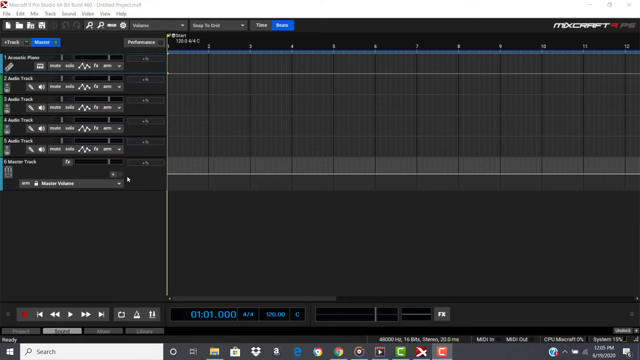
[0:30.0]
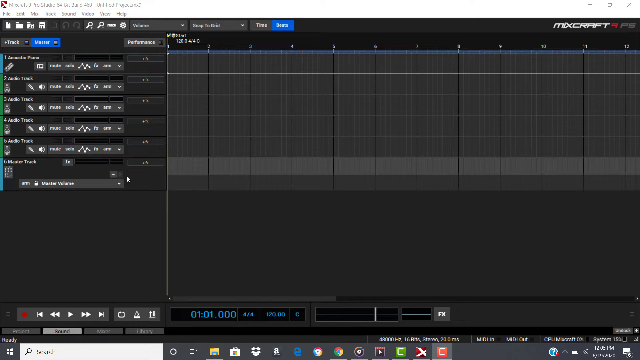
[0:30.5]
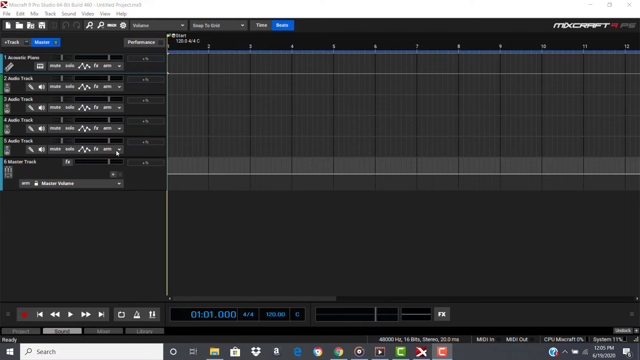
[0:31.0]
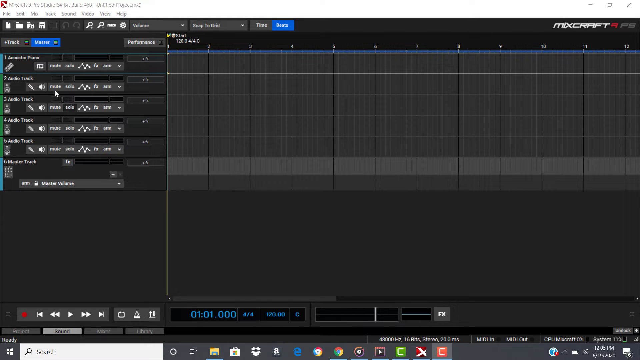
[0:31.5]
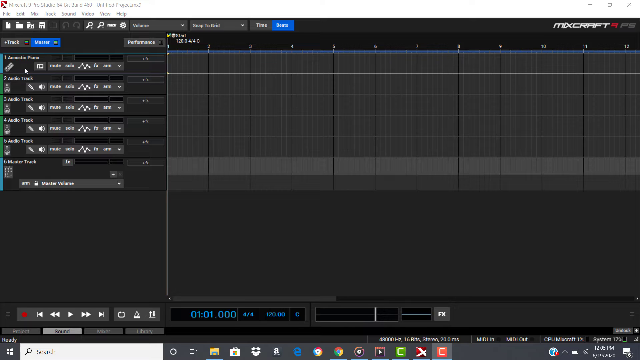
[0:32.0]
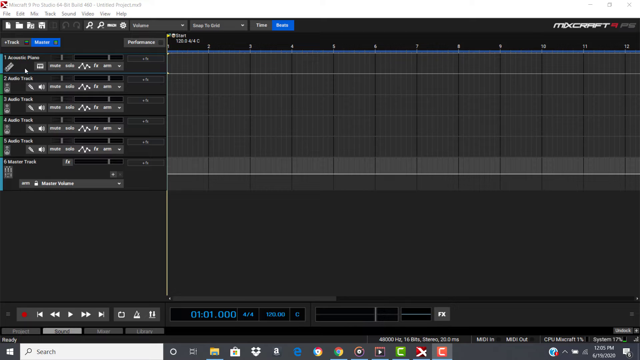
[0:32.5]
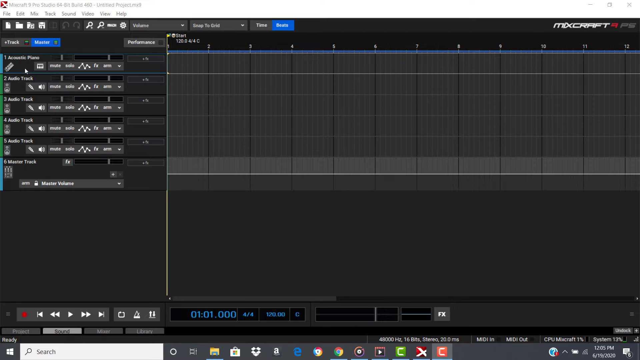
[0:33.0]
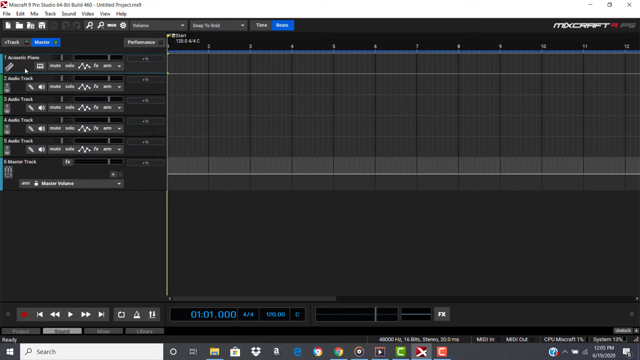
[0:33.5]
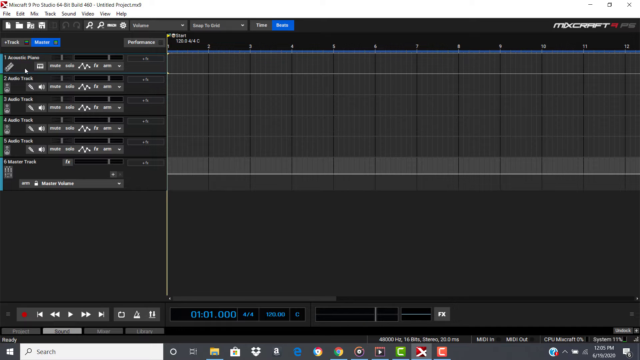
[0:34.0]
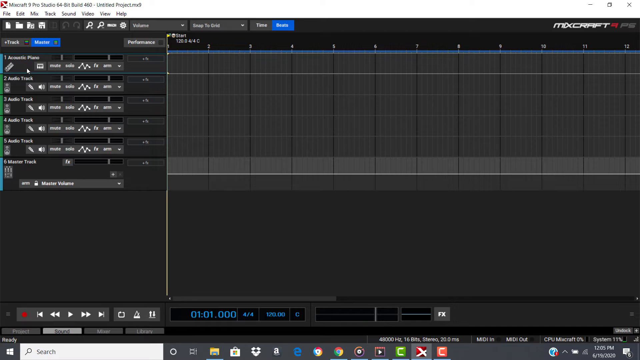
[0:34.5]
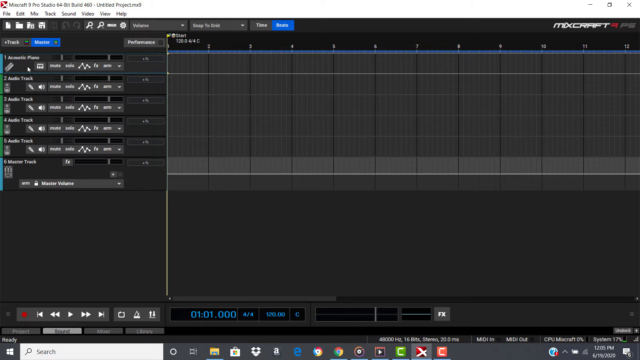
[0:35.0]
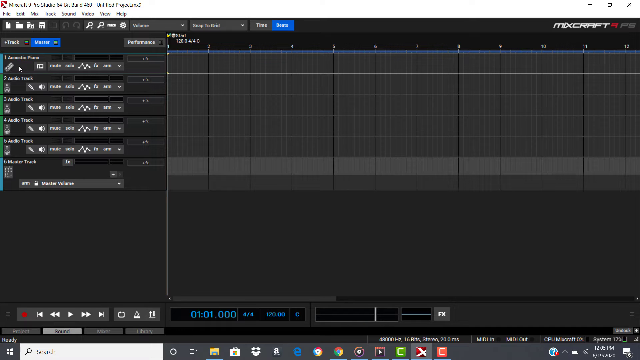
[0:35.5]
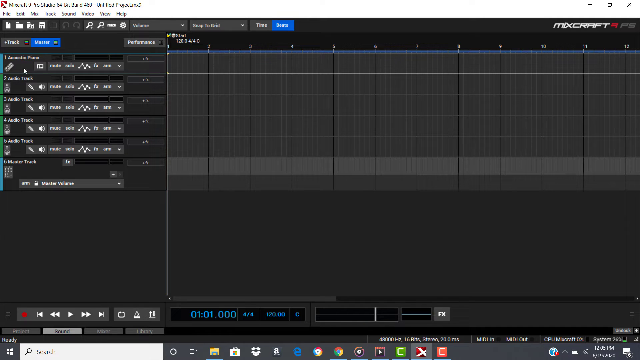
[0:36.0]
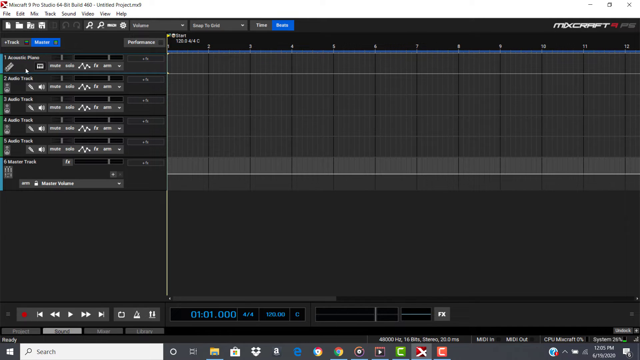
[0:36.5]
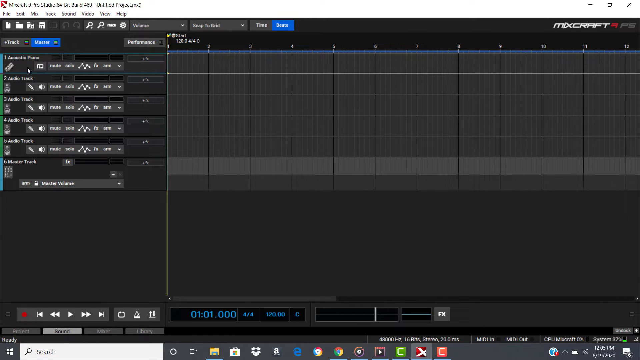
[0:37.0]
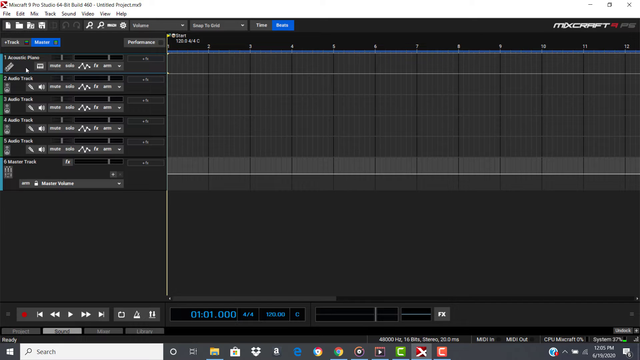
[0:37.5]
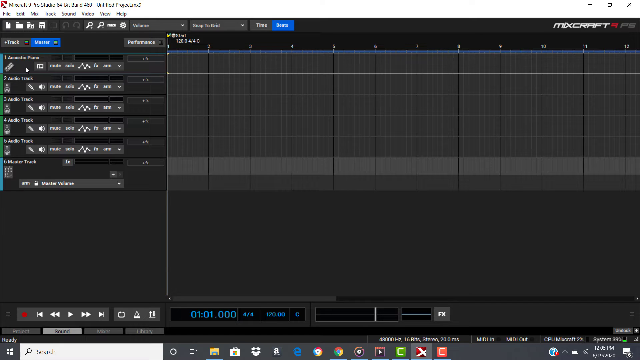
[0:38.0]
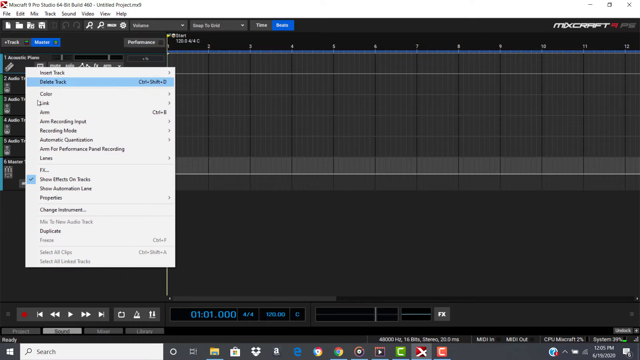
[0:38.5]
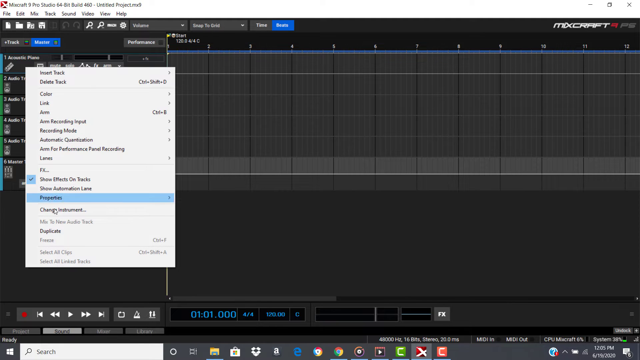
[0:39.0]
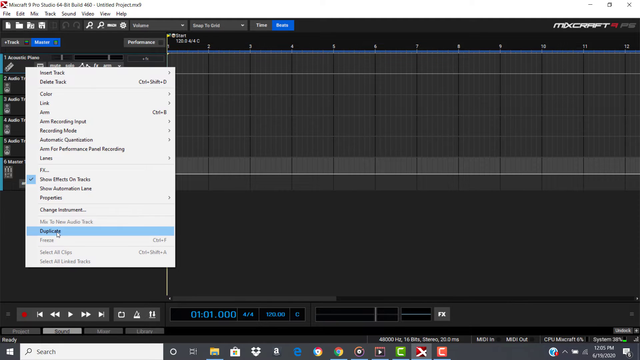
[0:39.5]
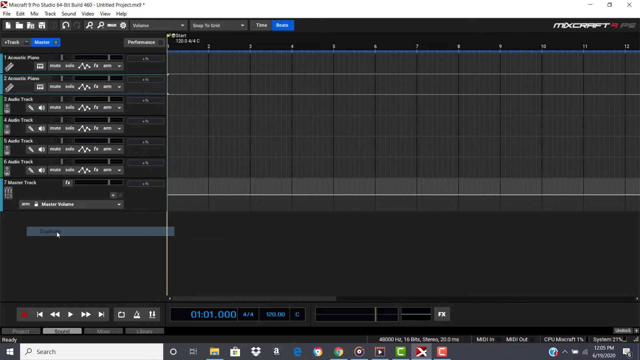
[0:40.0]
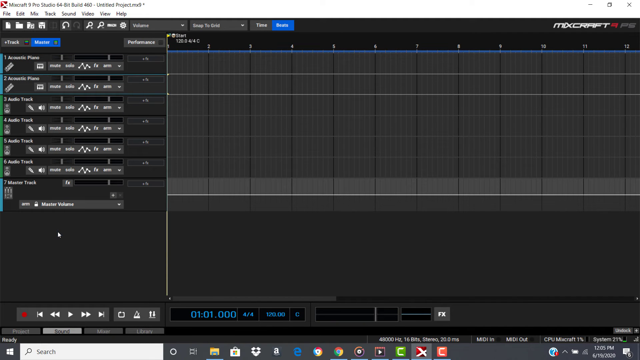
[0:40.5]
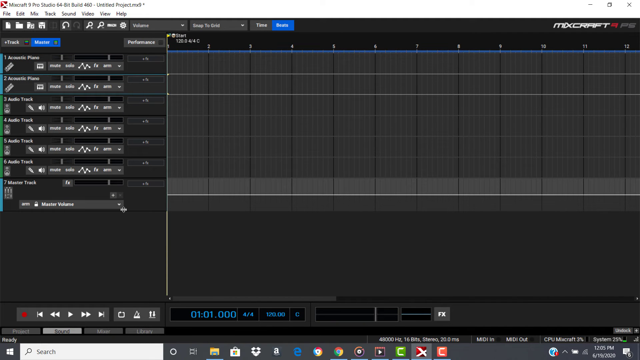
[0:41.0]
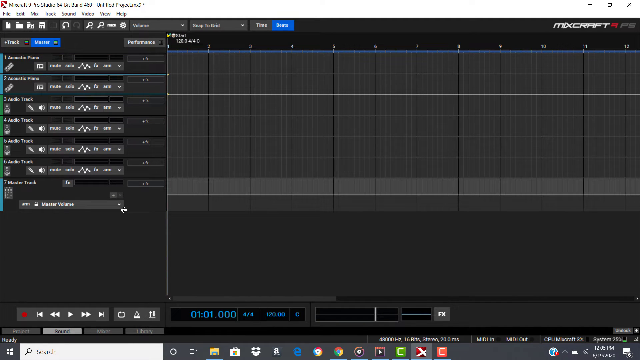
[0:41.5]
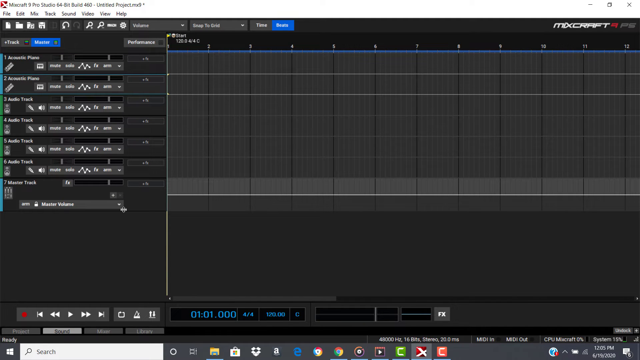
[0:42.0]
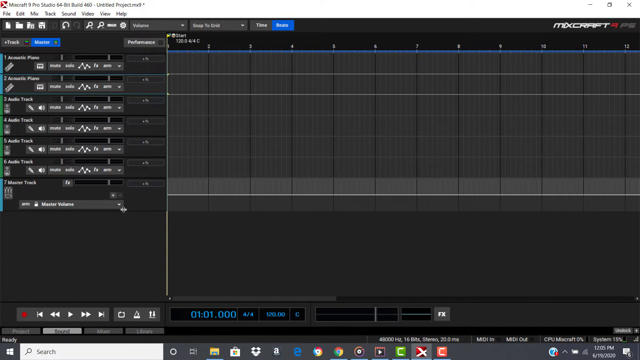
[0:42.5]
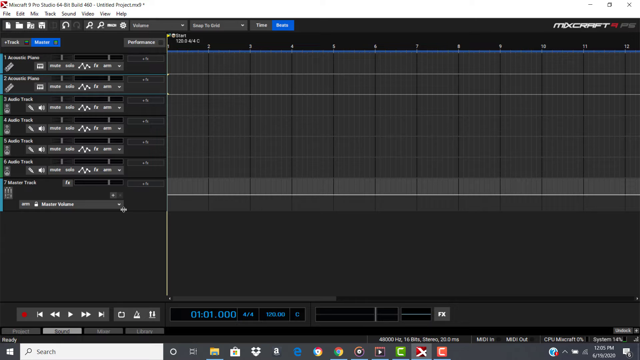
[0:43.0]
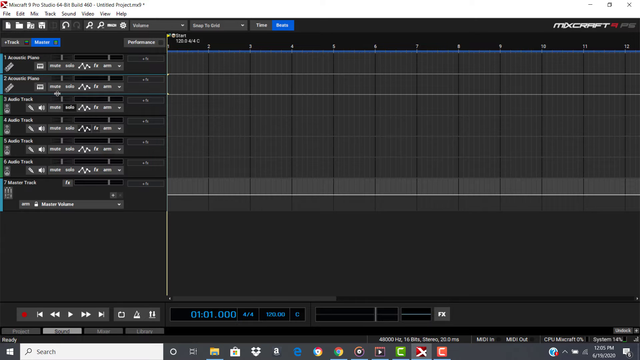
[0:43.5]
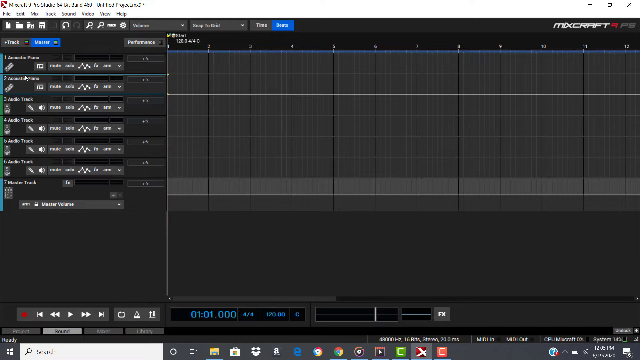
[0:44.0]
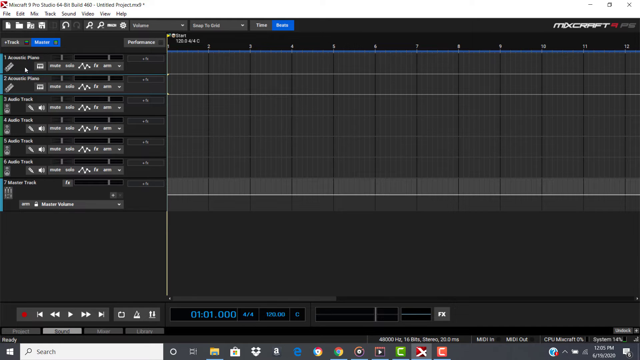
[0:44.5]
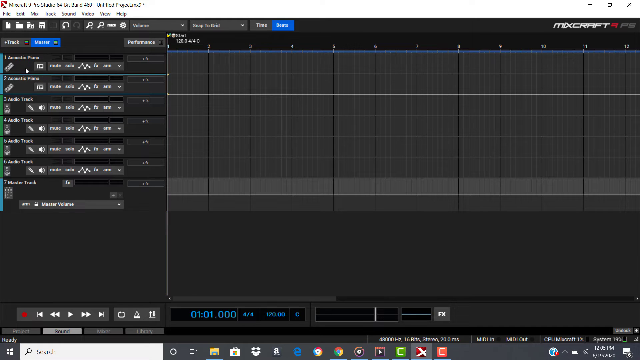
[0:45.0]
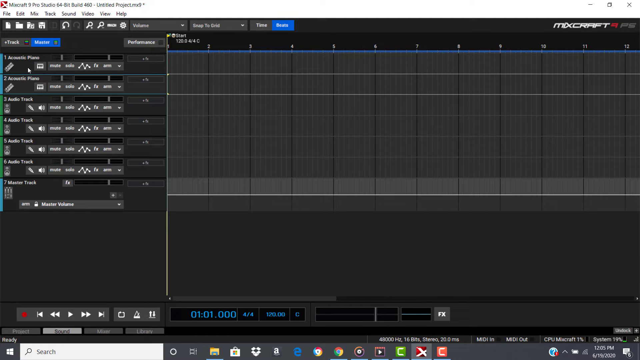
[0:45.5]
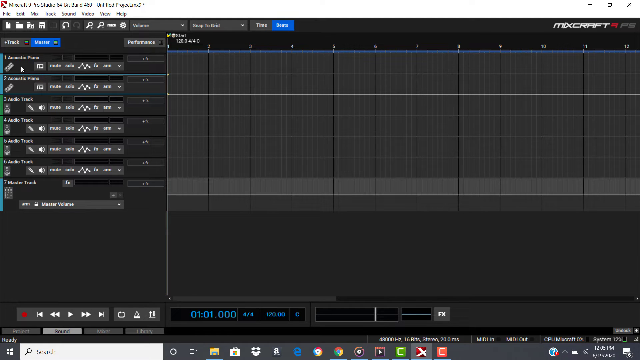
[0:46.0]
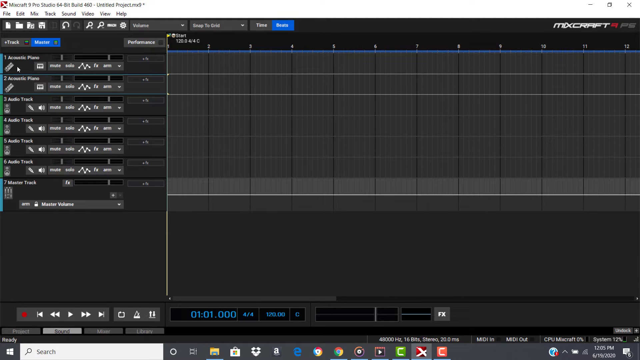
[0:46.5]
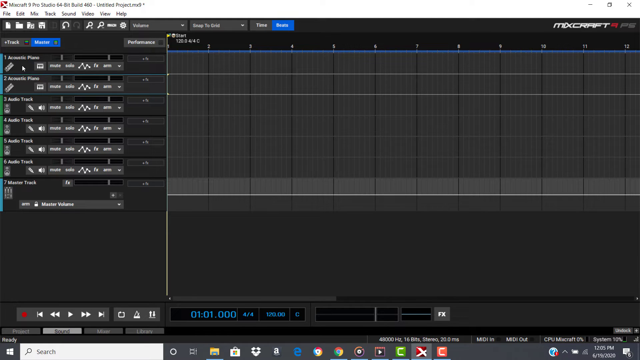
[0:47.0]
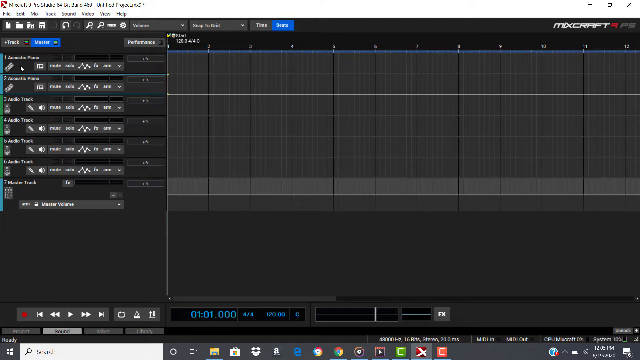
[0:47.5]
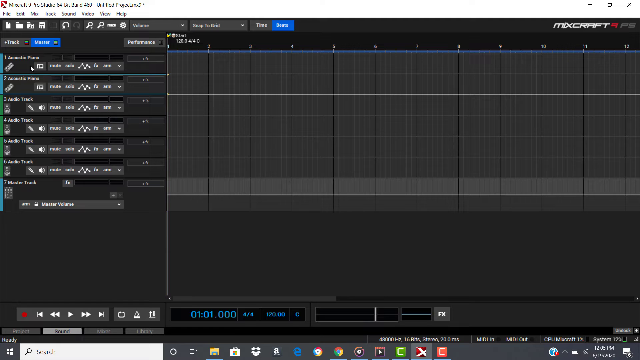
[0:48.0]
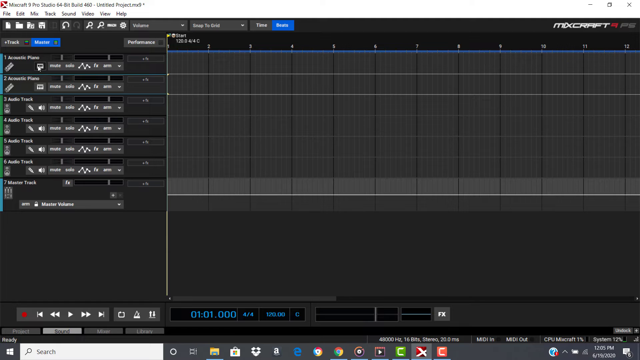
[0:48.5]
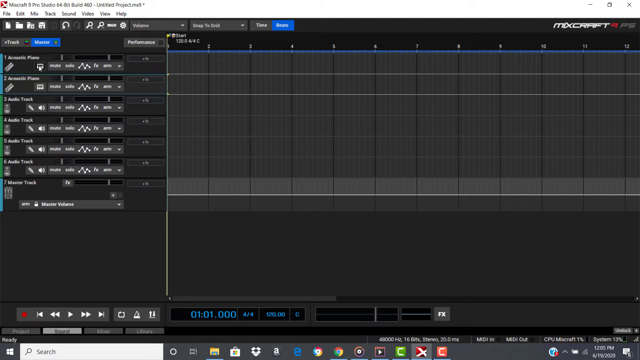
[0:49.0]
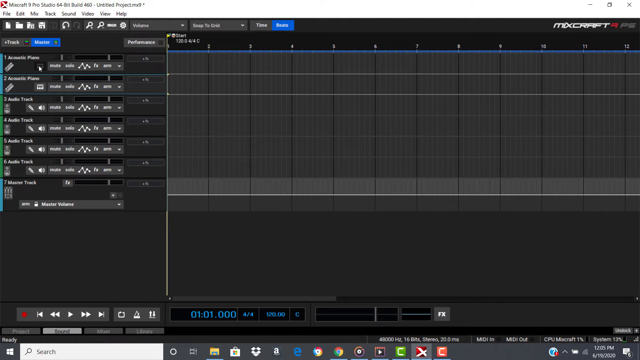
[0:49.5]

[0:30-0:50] A computer screen shows software called MixCraft, with its name in the upper right corner; it looks like some kind of sound software. Columns on the left side are numbered 1, 2, 3, 4, 5, 6; their font is tiny, but they appear to be audio tracks. On the right side, multiple columns run next to each other, also numbered. A mouse cursor moves to the number 1 on the left side, kind of jiggles, right-clicks, and clicks on duplicate. It then goes back up to the number 1 and clicks on a different, kind of square icon, which opens another box.